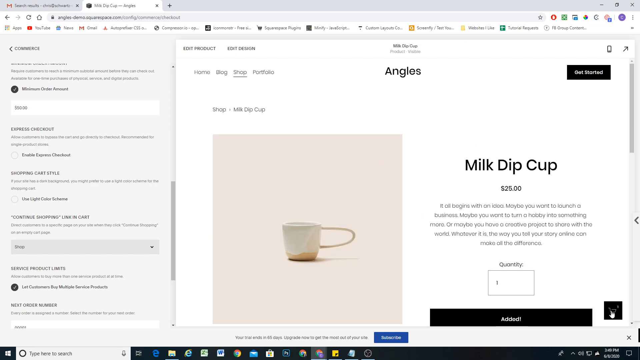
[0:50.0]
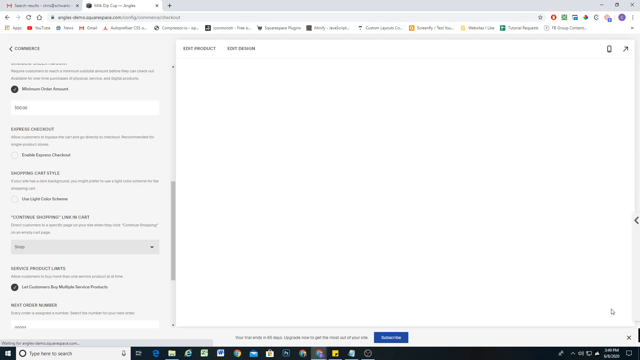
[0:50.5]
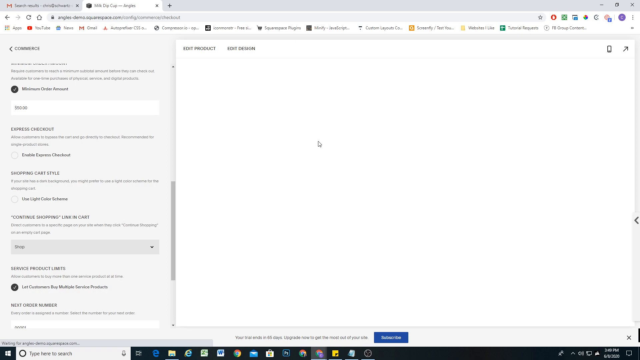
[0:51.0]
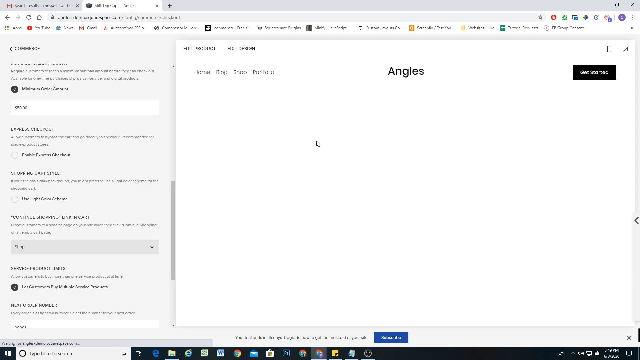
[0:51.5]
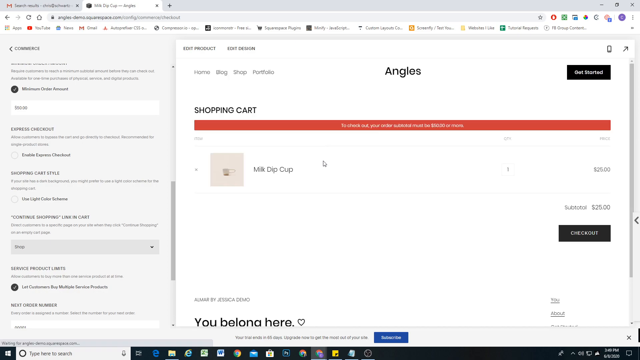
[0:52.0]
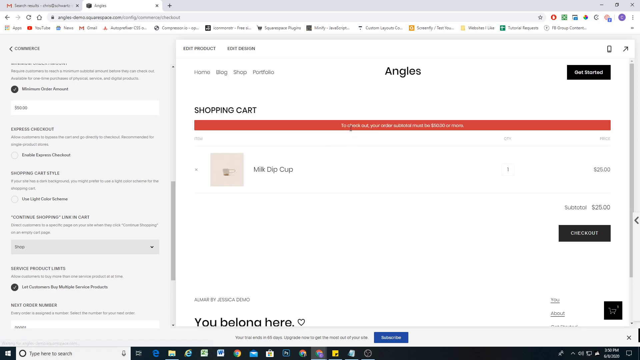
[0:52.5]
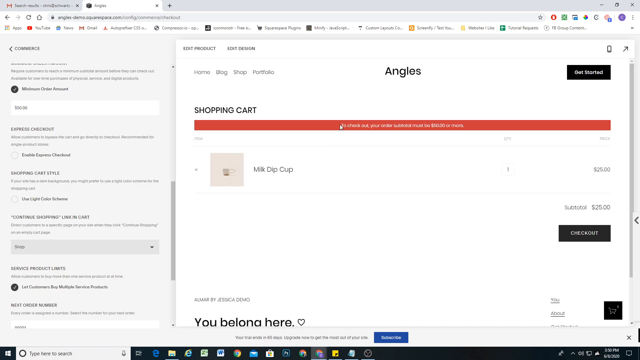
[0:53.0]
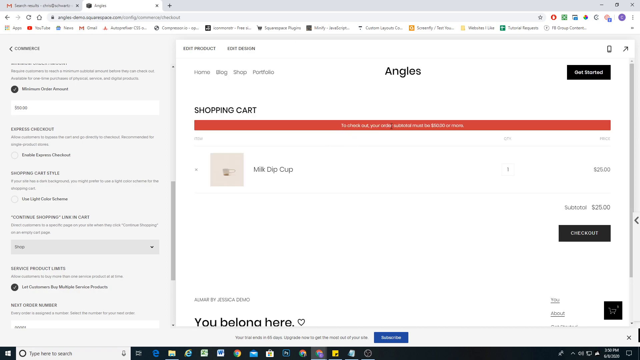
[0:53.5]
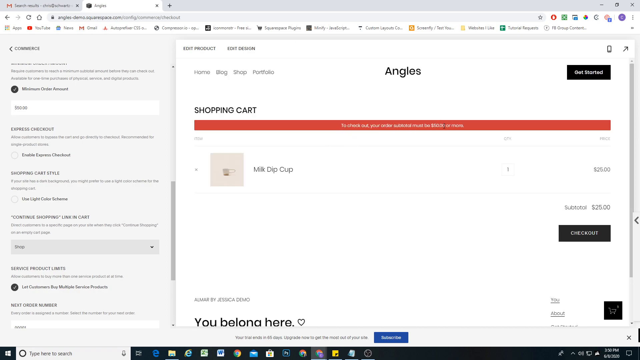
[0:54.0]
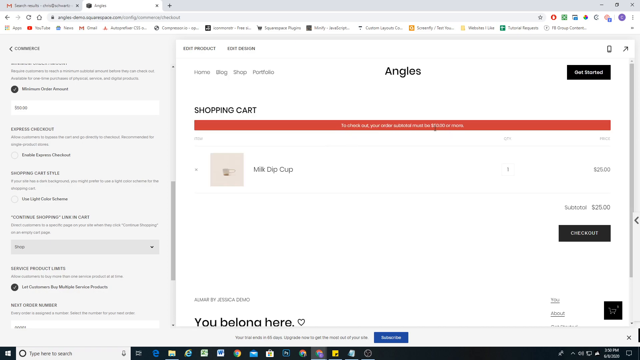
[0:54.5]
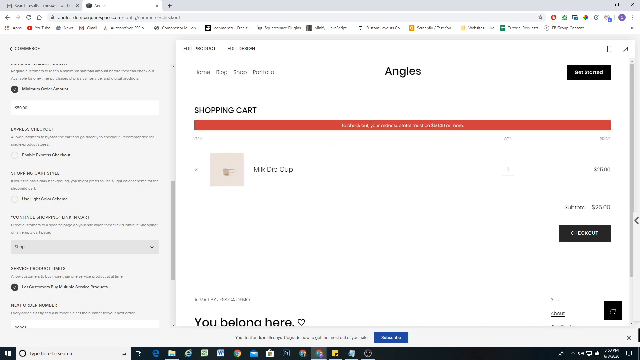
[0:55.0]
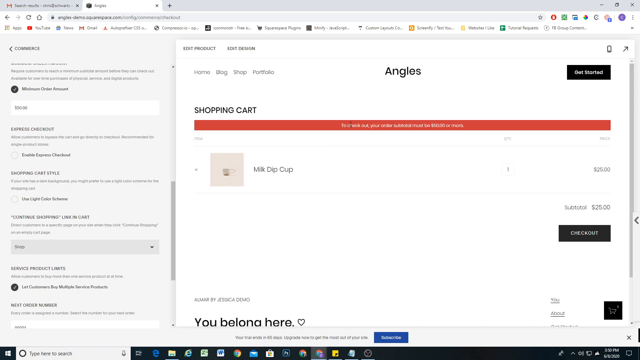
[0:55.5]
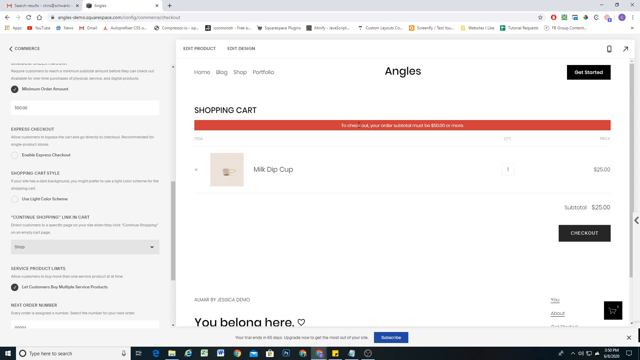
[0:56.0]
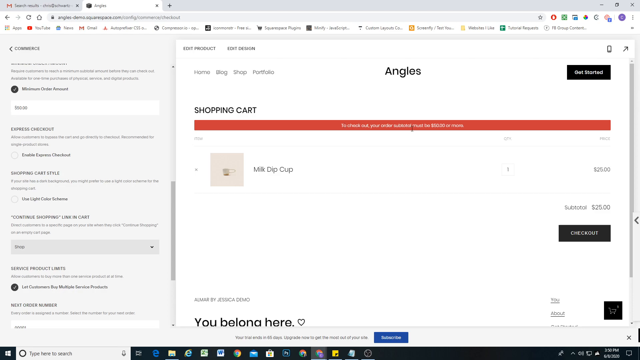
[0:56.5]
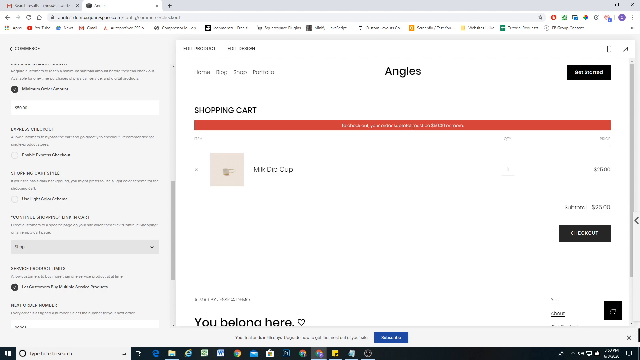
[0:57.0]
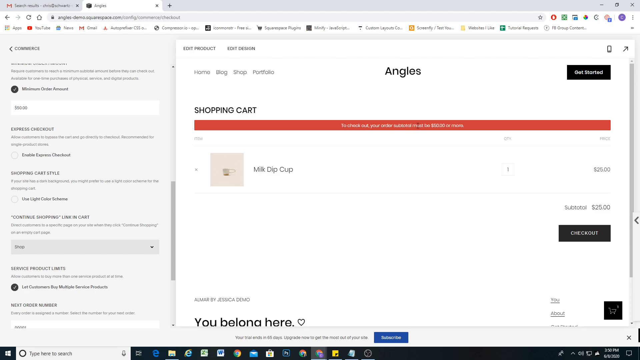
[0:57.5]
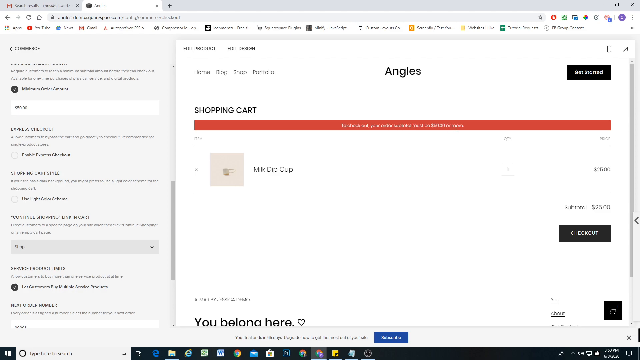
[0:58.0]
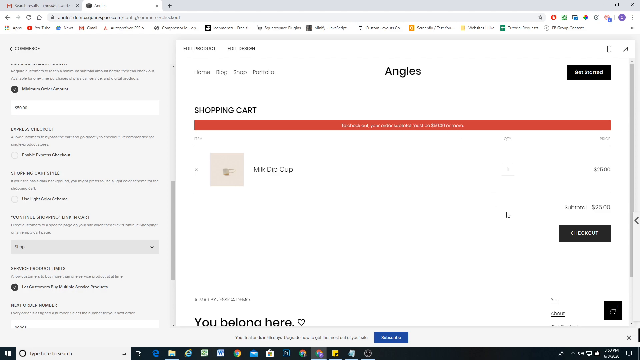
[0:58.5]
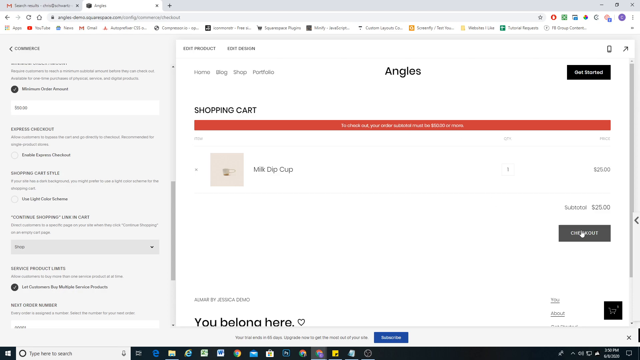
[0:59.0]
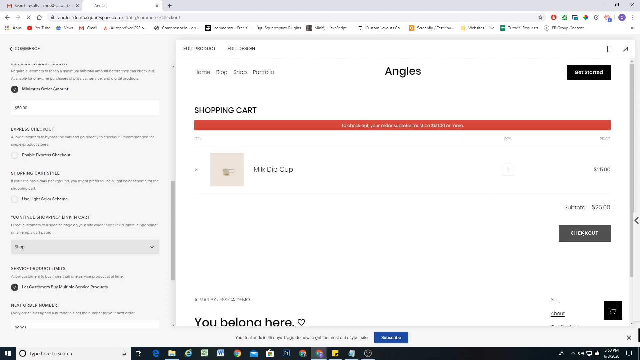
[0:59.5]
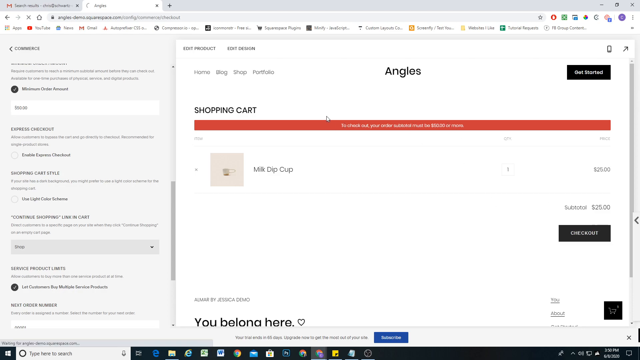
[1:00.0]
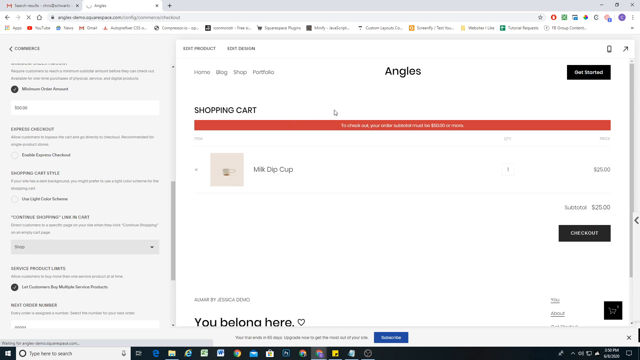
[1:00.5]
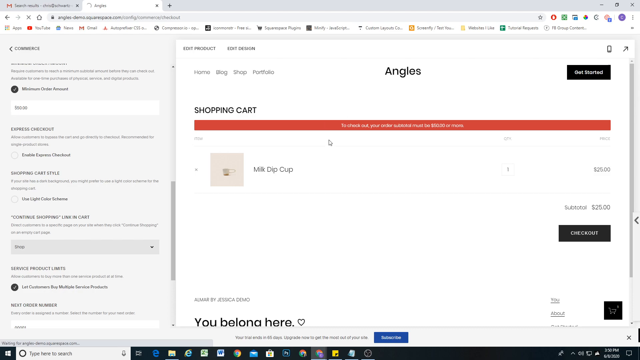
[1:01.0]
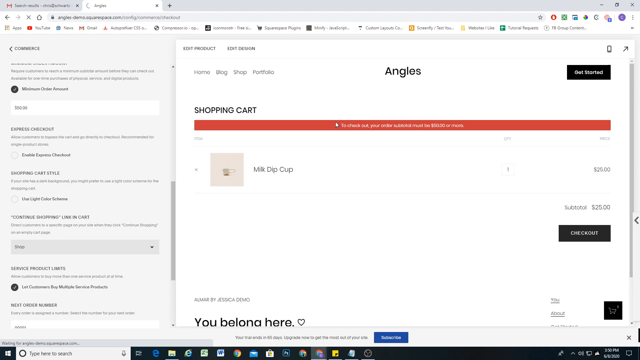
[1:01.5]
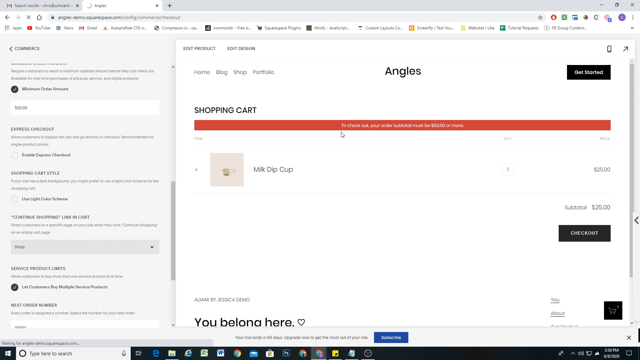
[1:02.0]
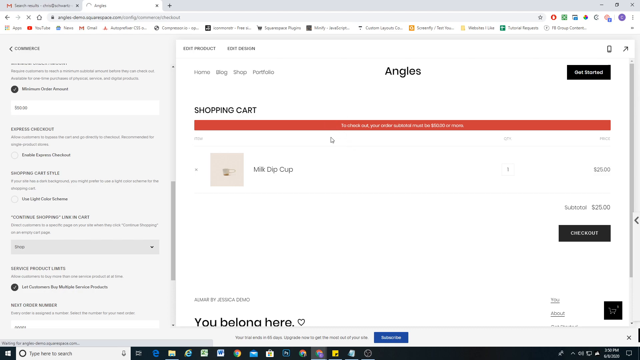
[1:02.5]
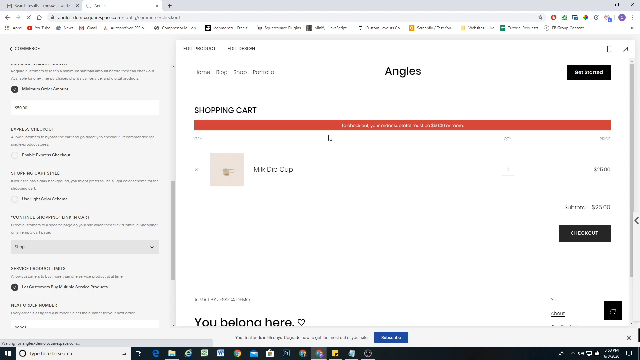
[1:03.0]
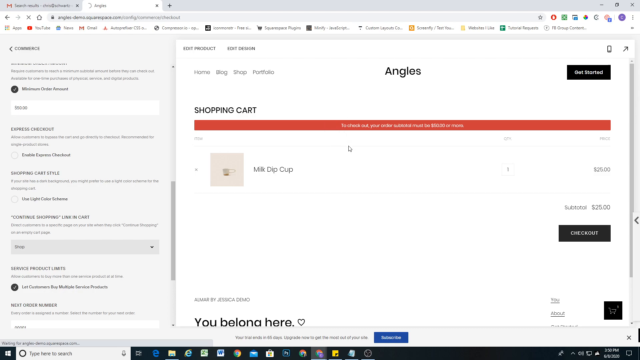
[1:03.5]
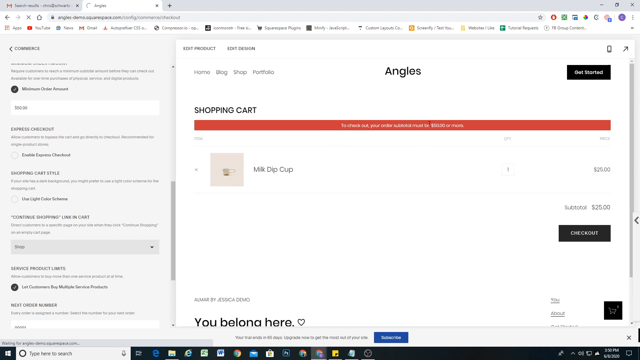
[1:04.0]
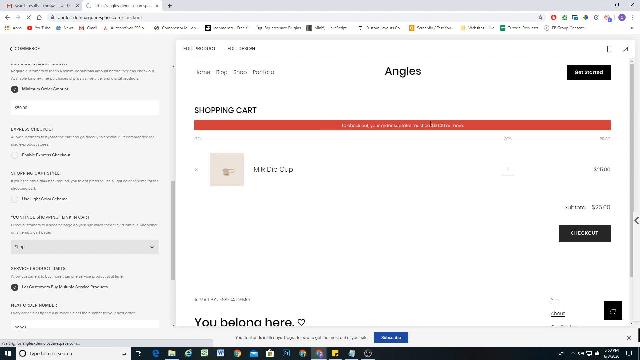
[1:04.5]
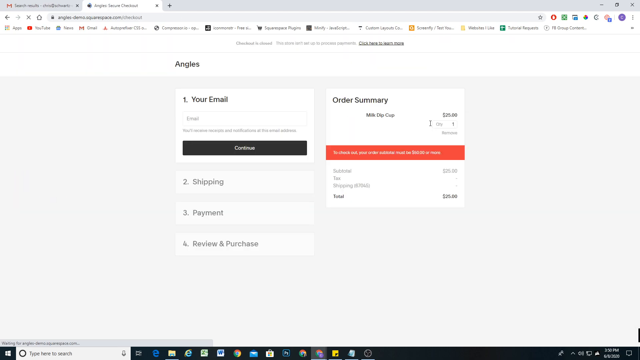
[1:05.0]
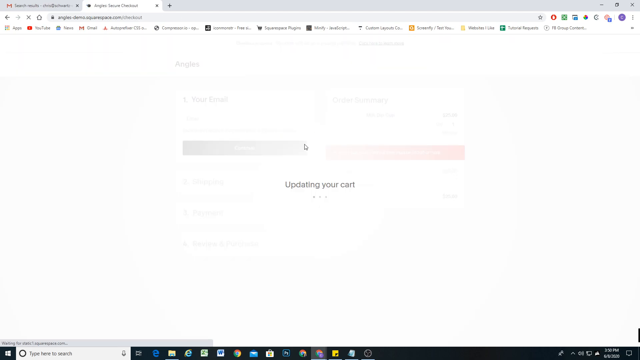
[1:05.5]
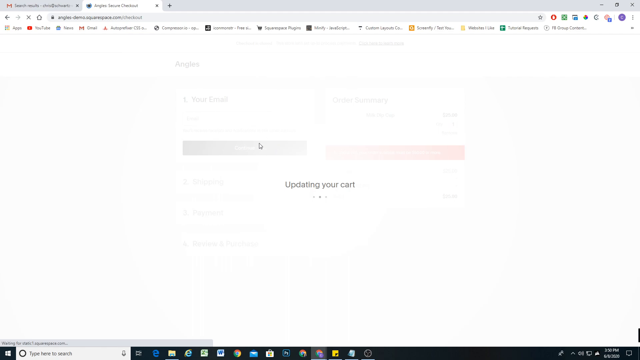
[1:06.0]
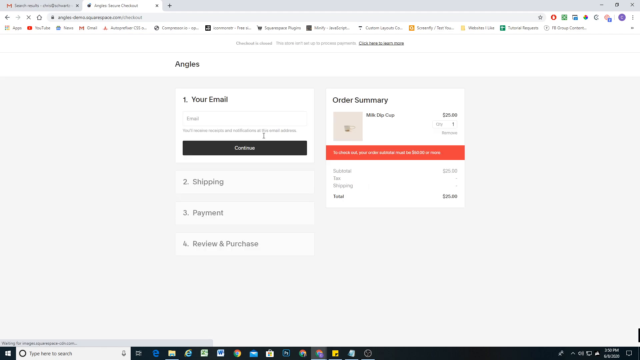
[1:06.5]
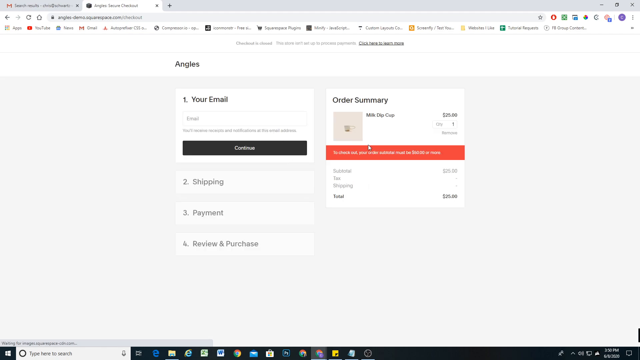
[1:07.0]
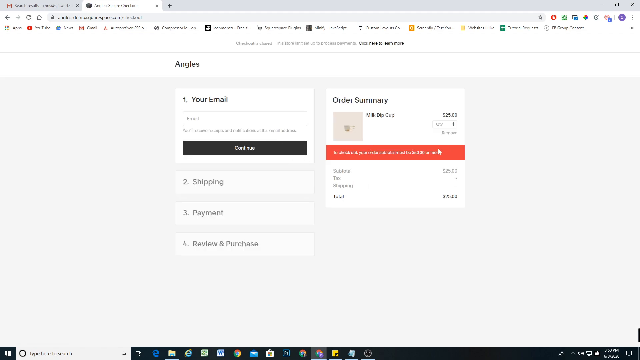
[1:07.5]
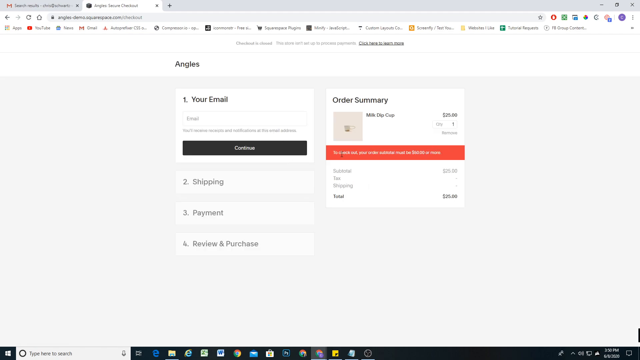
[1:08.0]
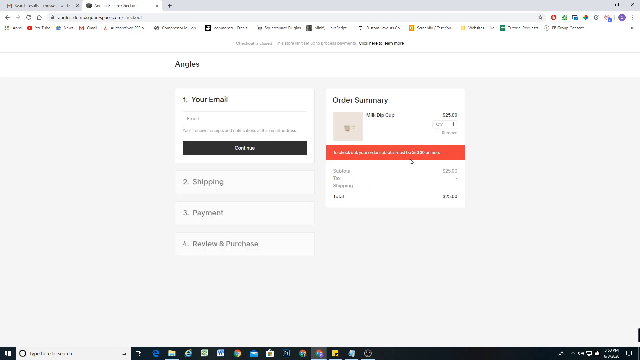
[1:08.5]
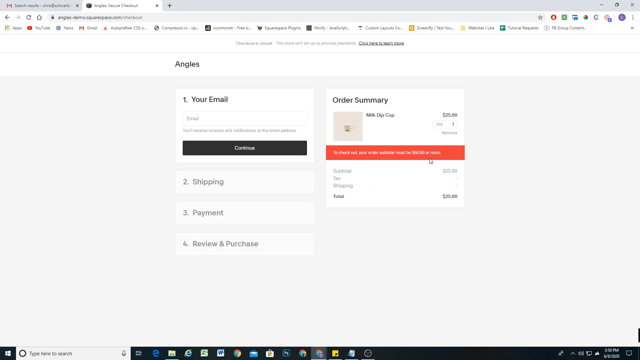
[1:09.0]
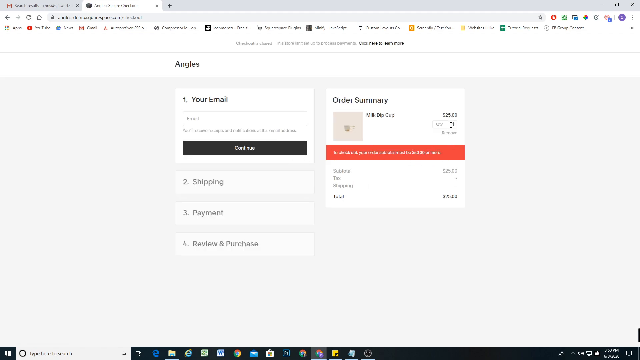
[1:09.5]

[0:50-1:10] One Milk Dip Cup is added to the cart, and the view switches to the shopping cart. The Milk Dip Cup picture is now a listing on a new page, with Milk Dip Cup all the way on the right side of the white background and $25 listed on the very right, just next to the scroll bar. Beneath that, "checkout" is printed in white over a black box. The view then switches to an order summary page with a field for an email and the order summary. There is an orange box with white text, but the text is illegible. Underneath the email form are three options and forms to fill out: shipping, payment, and review and purchase. Underneath the orange box are the subtotal of $25, then tax, which is blank on the right side, then shipping, also blank, and finally the total, written in bold text, at $25.